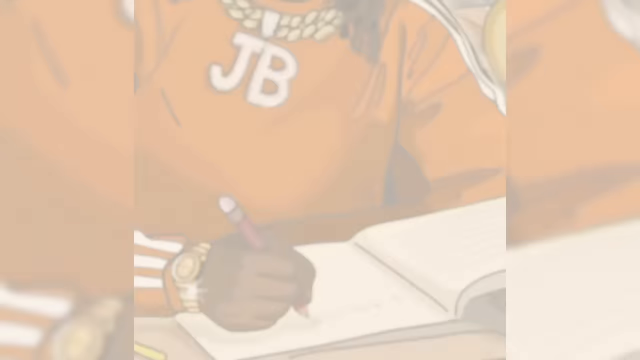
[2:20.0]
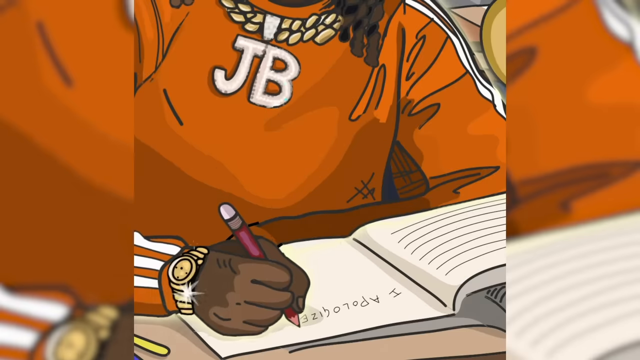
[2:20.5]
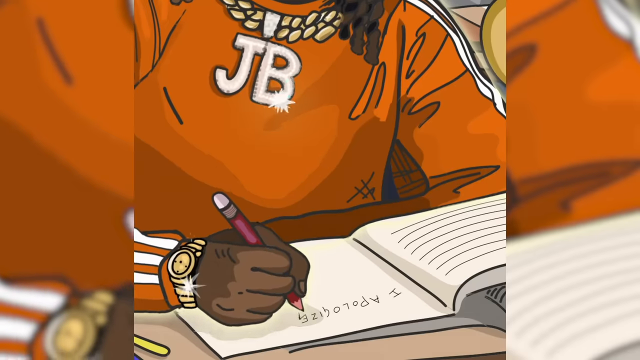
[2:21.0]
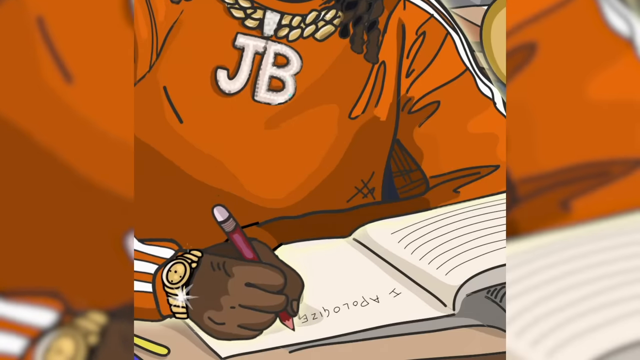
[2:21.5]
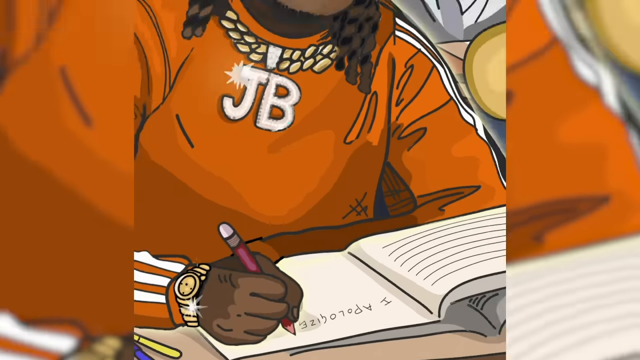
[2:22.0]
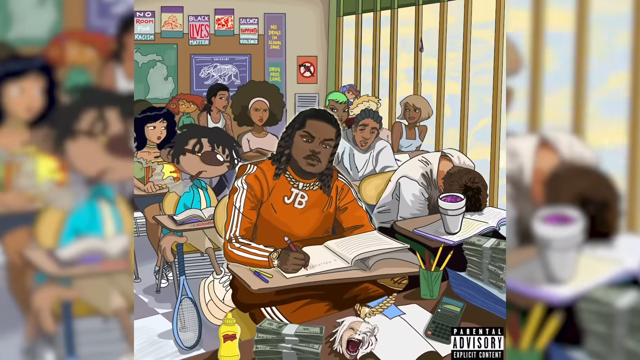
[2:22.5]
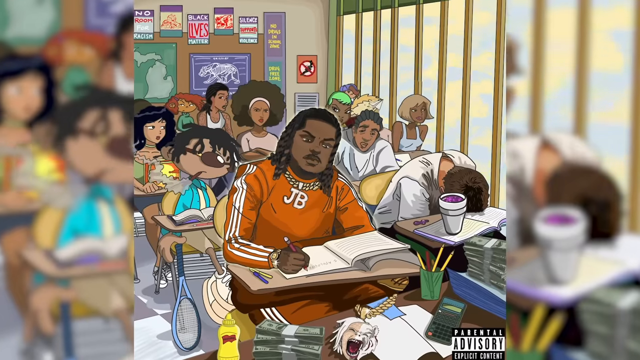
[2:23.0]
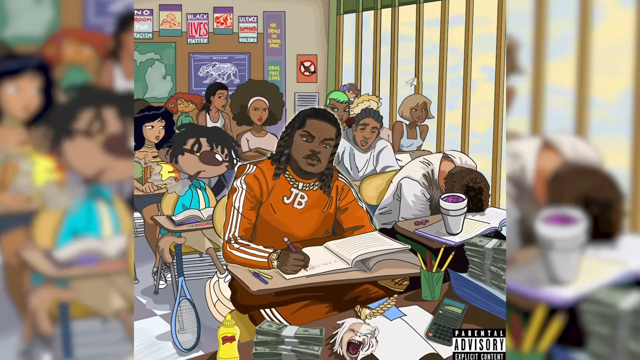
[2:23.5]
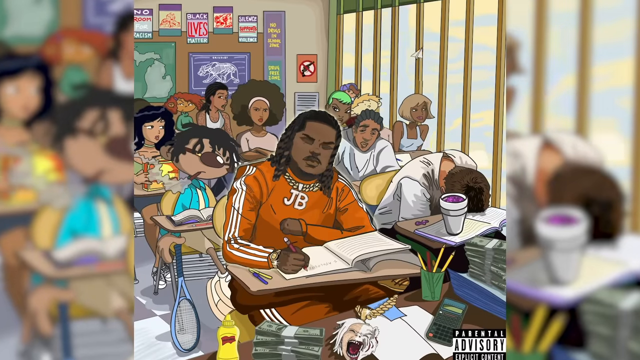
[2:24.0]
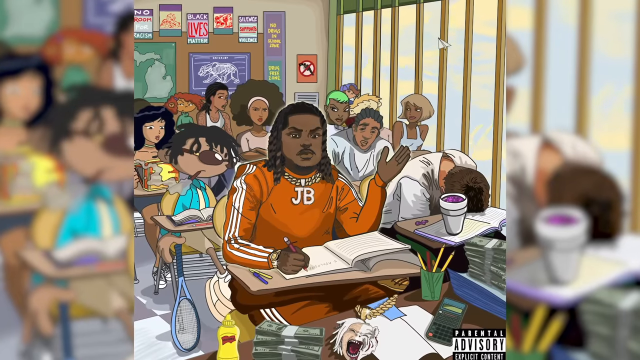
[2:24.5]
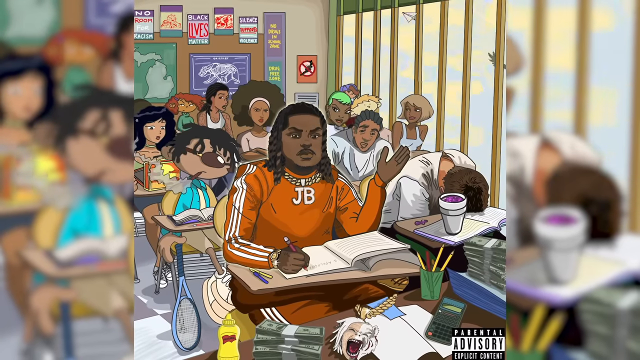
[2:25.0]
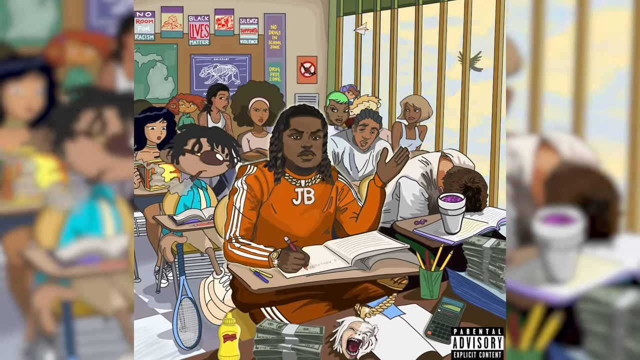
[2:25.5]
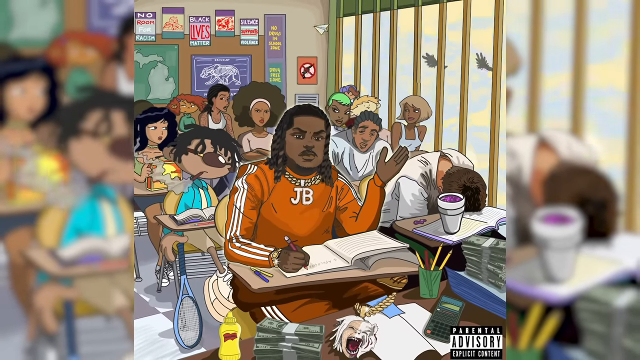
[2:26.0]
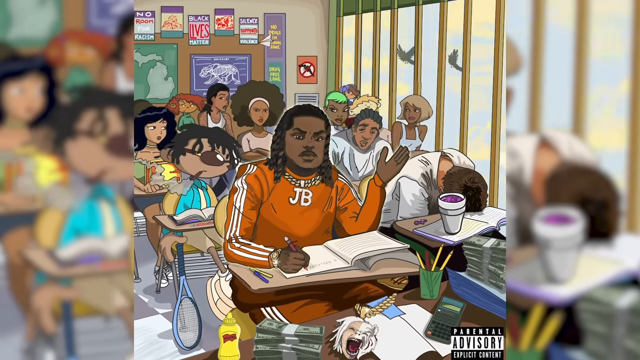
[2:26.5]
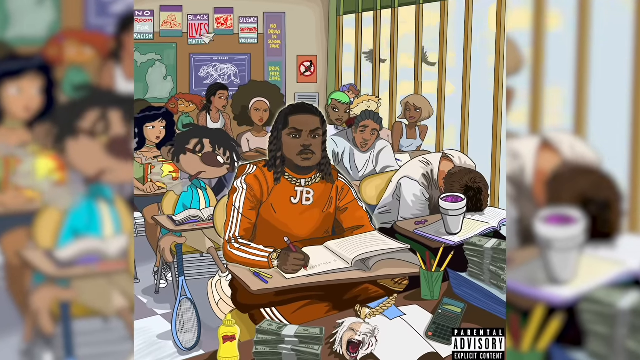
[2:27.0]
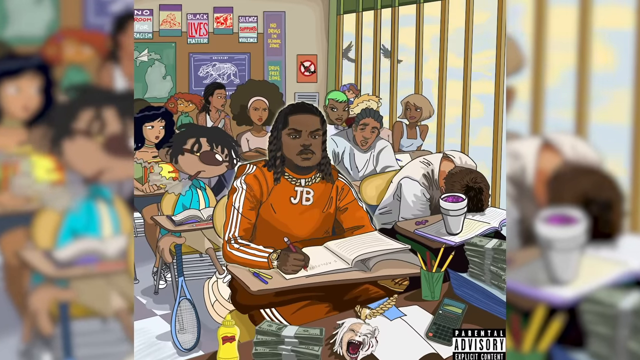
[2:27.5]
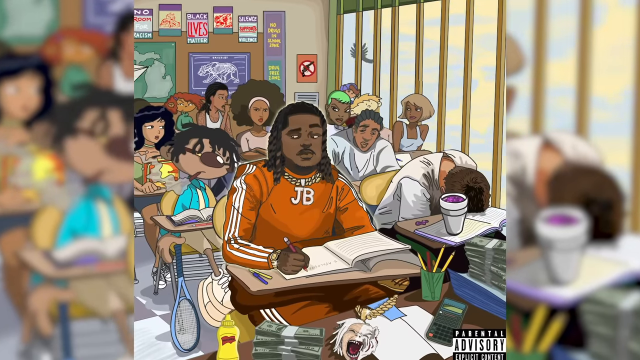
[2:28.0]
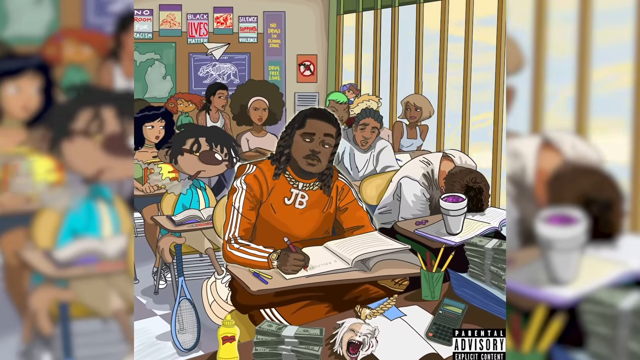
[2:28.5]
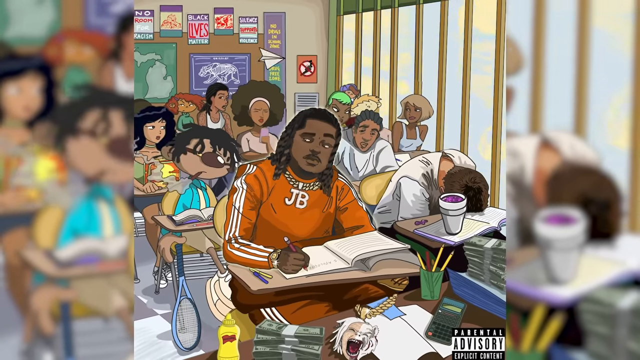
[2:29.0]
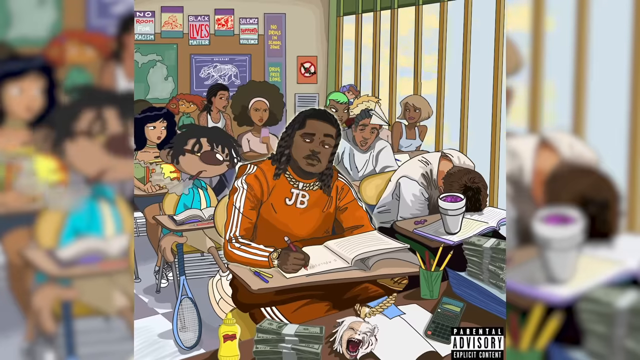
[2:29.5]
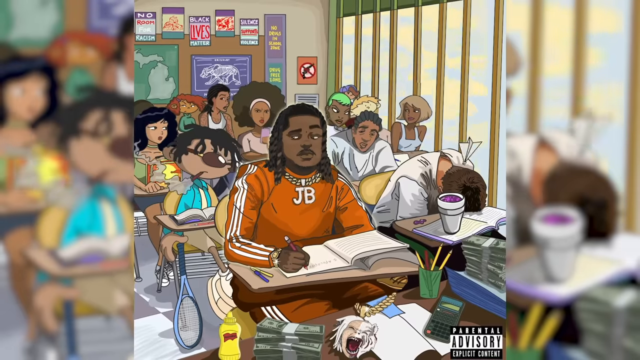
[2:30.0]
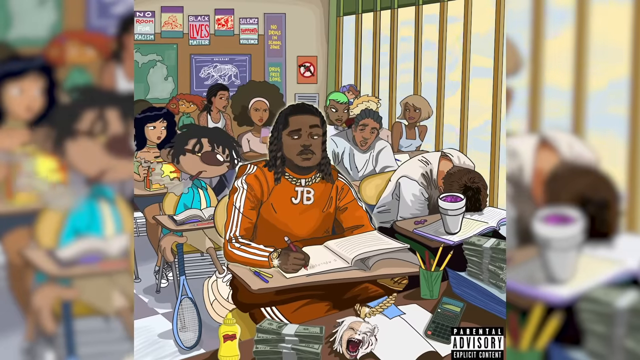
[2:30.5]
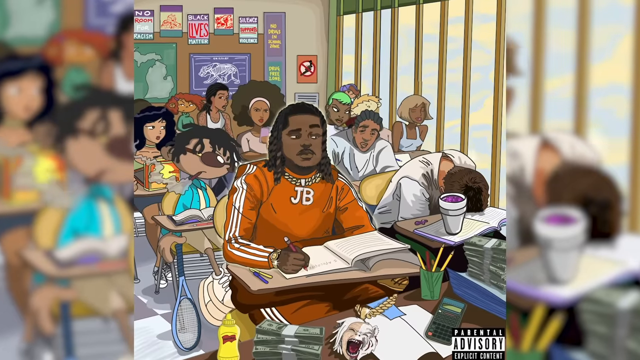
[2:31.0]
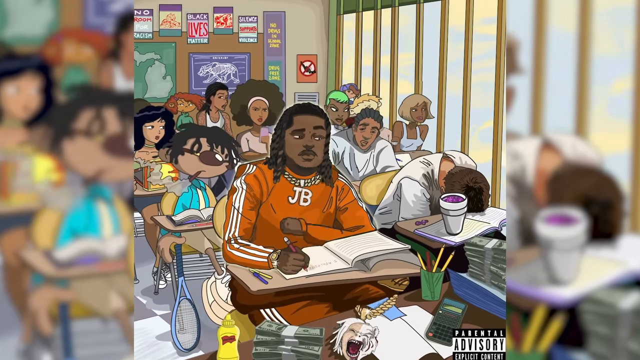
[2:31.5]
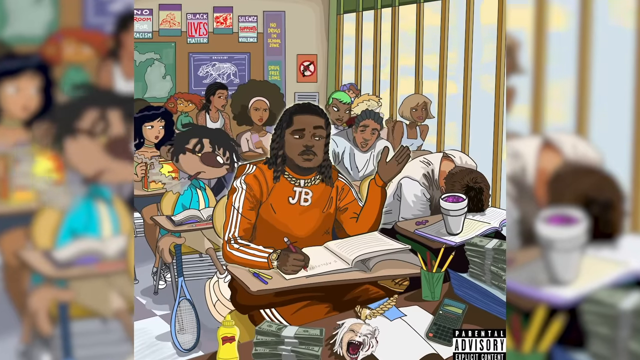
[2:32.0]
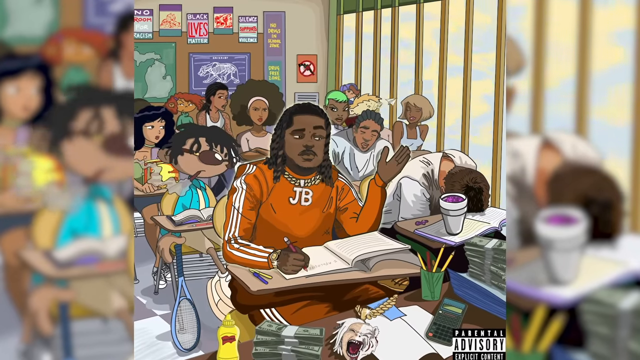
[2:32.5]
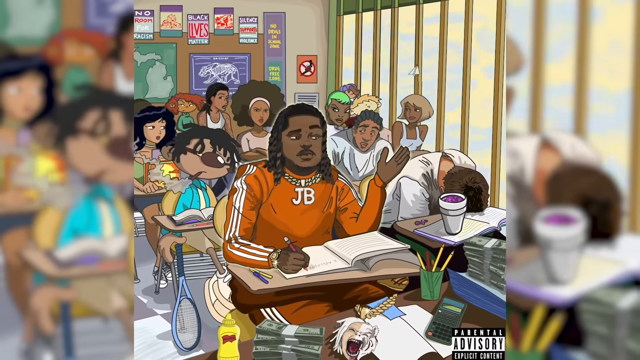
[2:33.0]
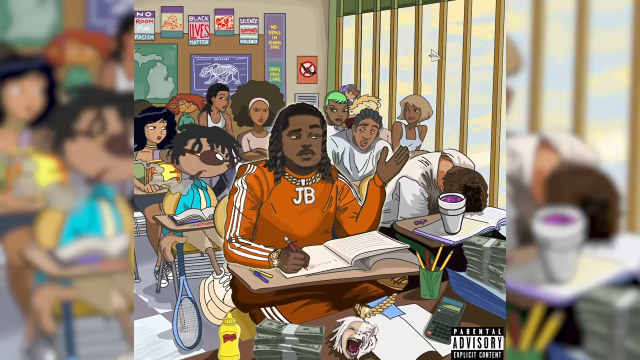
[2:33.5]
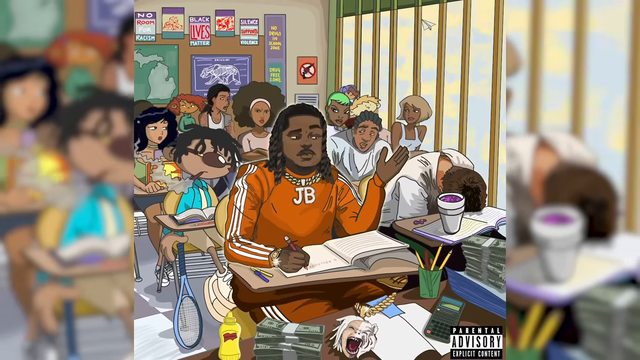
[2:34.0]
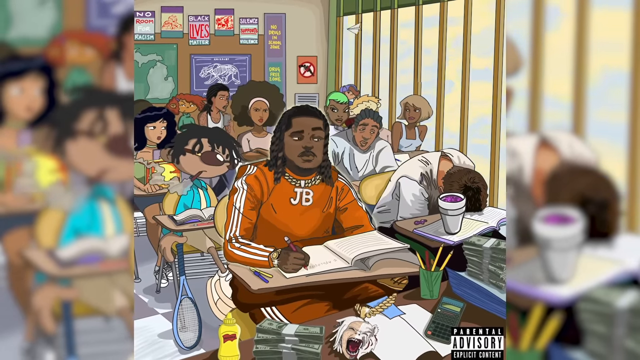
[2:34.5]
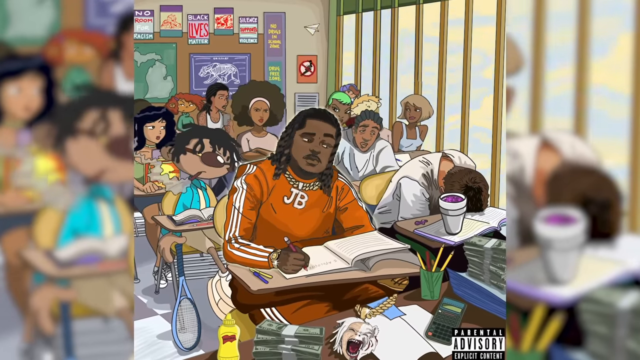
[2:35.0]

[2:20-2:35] JB writes "I apologize". A purple object drops from the air and lands on the desk of the knocked-out guy sitting next to him, apparently thrown by someone; it is possibly a Jolly Rancher candy. That guy's desk has a purple cup on it, likely holding a drug mixture. No one is talking to each other, and there is no teacher actively teaching, just a lot of things on the teacher's desk, while the students look spaced out.